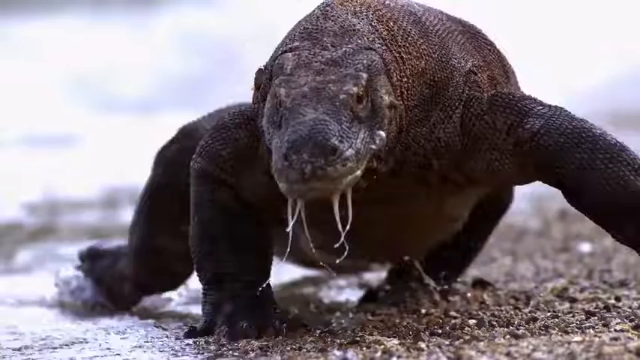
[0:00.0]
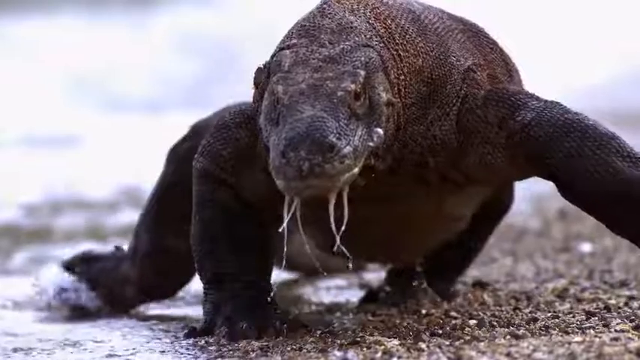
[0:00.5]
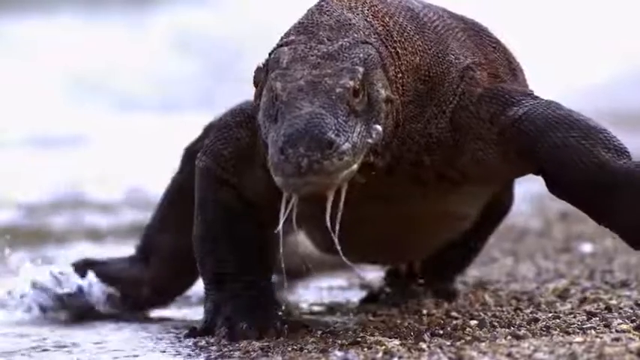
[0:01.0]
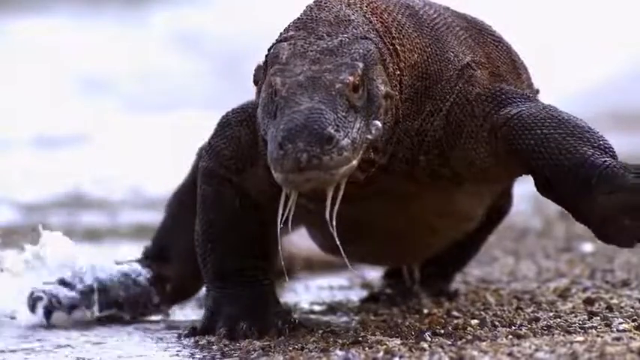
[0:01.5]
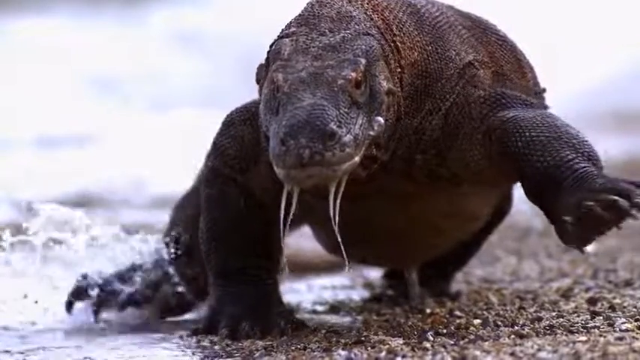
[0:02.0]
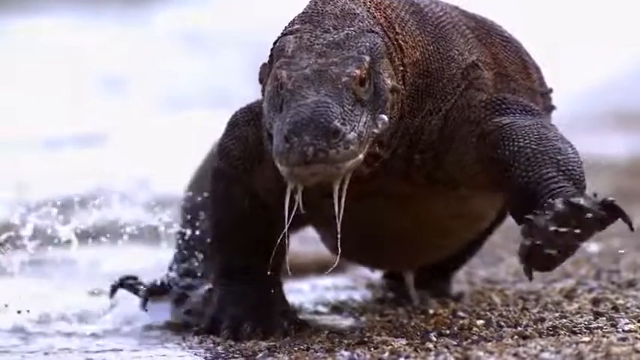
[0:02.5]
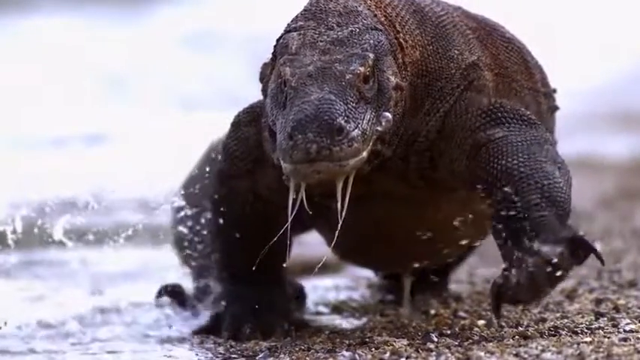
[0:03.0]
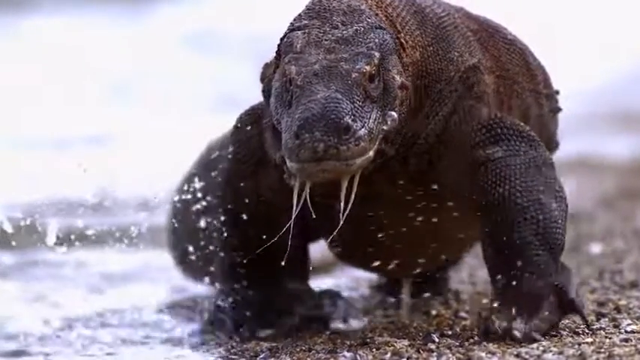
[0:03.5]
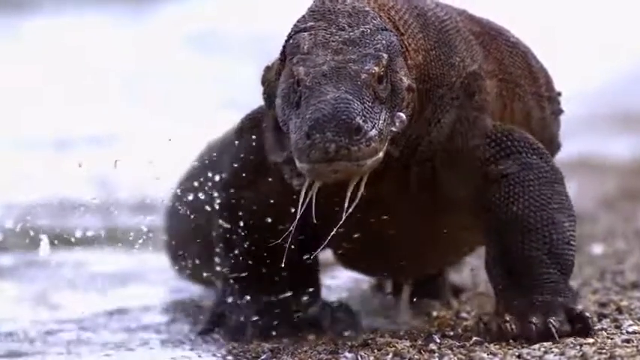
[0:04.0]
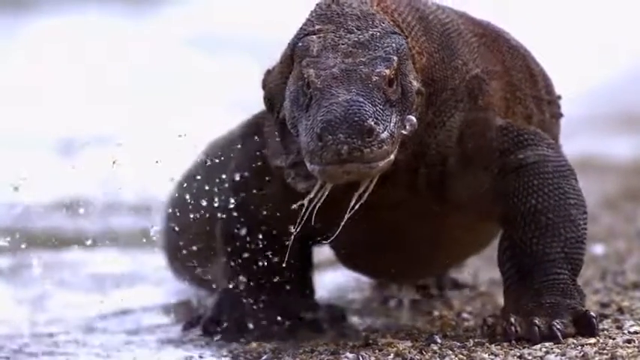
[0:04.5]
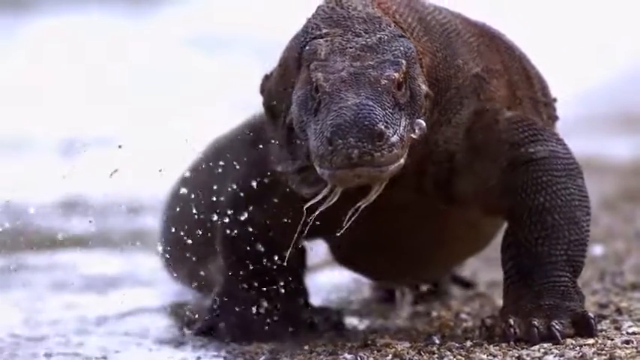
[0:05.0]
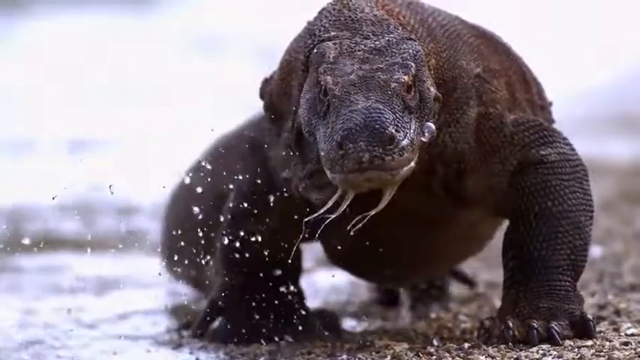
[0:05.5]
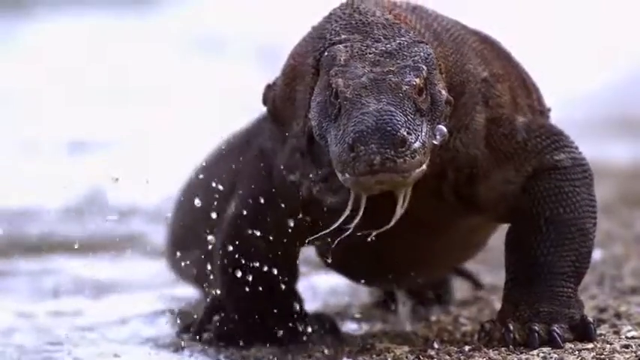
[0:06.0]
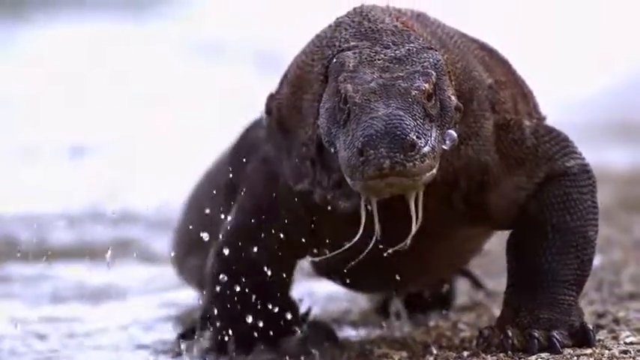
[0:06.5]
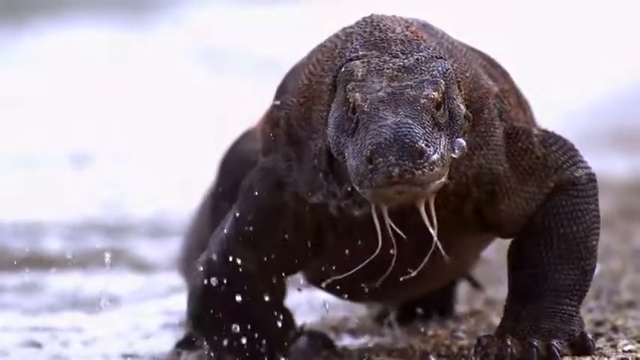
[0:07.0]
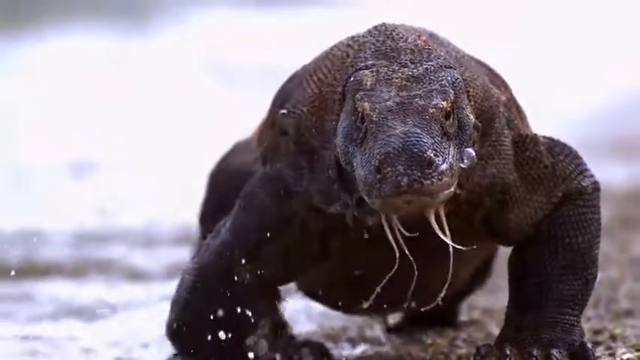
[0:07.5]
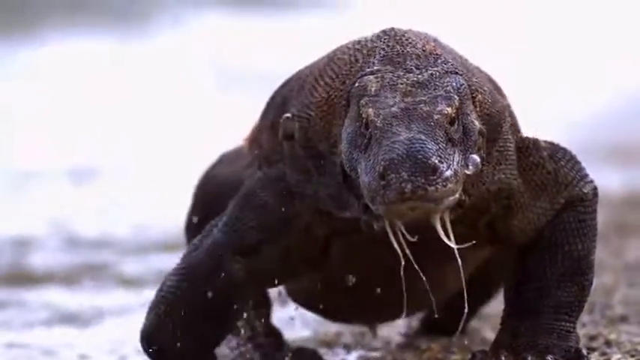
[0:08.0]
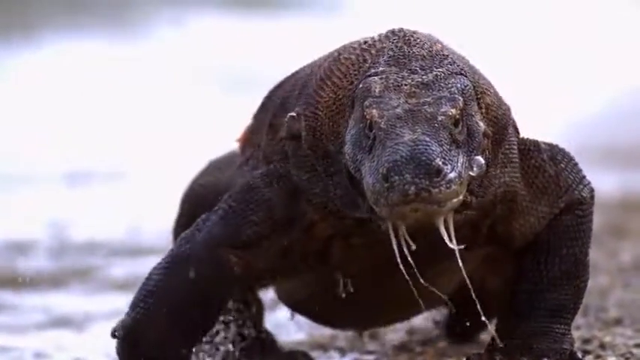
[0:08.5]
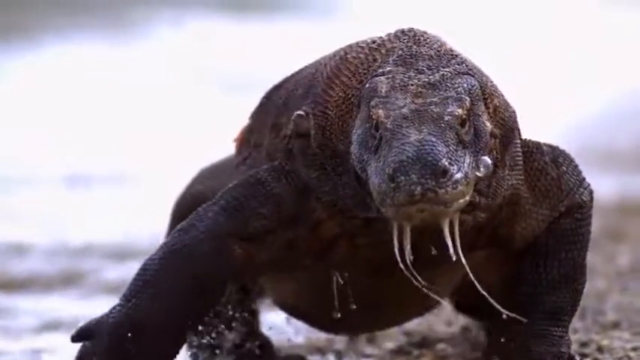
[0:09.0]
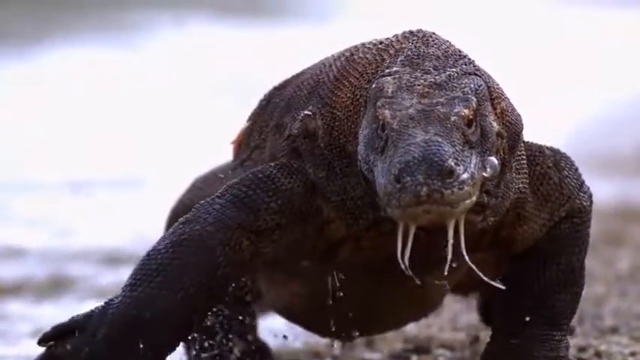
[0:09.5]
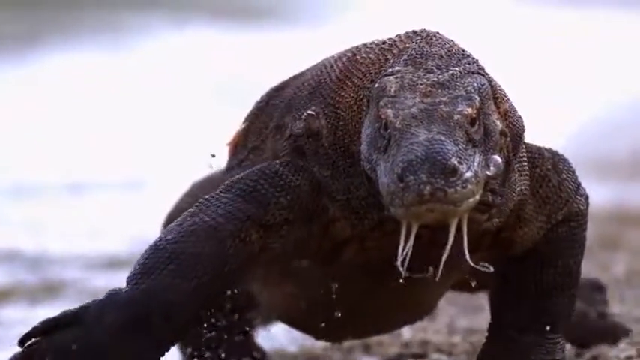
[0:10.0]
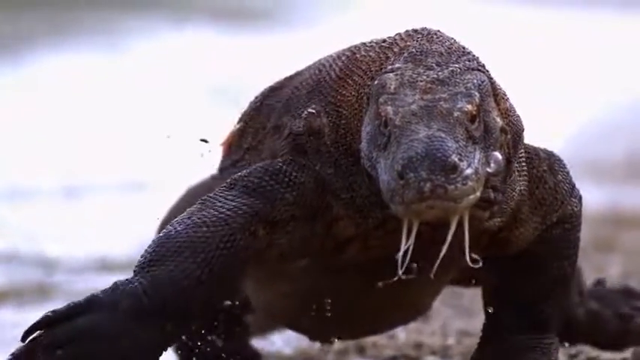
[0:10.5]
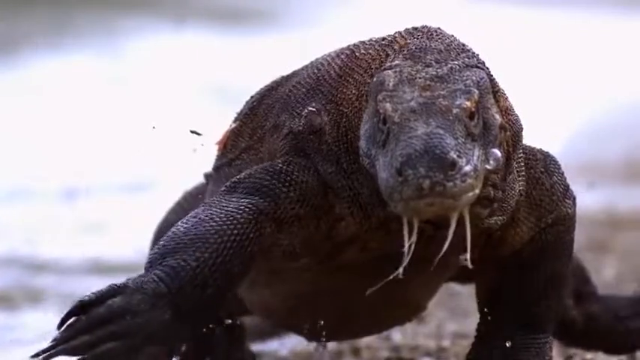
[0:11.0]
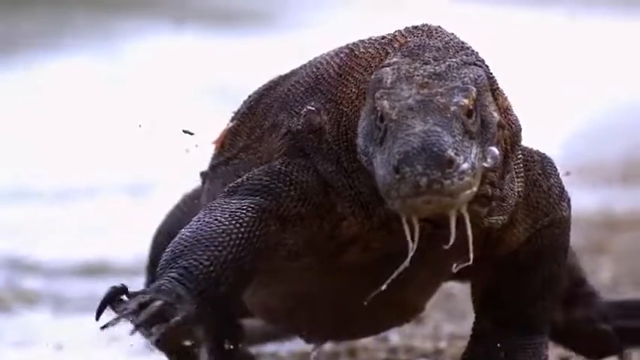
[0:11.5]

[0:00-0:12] A large, giant lizard-type creature crawls in slow motion across a beach. One of its back feet splashes into the waves of the sea, and it looks like it has drool hanging from its mouth. It is covered in thick brown scales and looks like a very old creature. The beach is covered in small pebbles and sand. The animal moves its front legs and back legs very slowly, and its arms and legs look very muscly. Four strands of white dribble come out of its mouth.